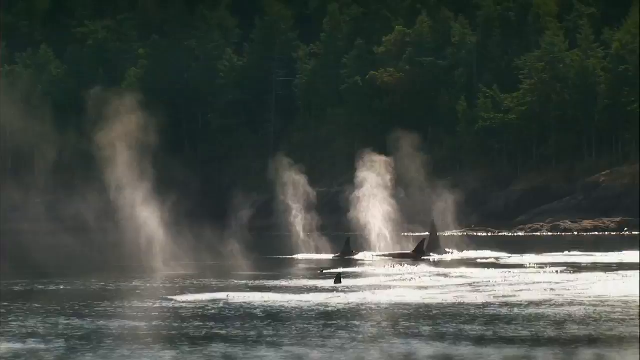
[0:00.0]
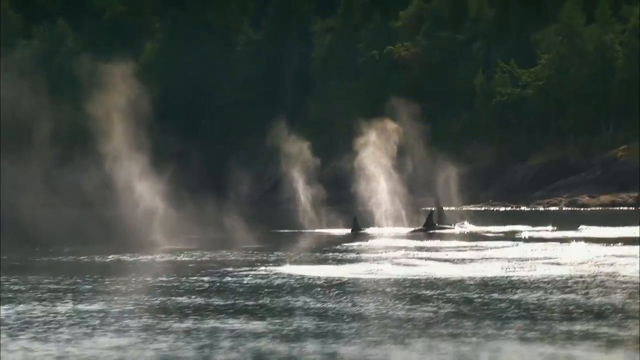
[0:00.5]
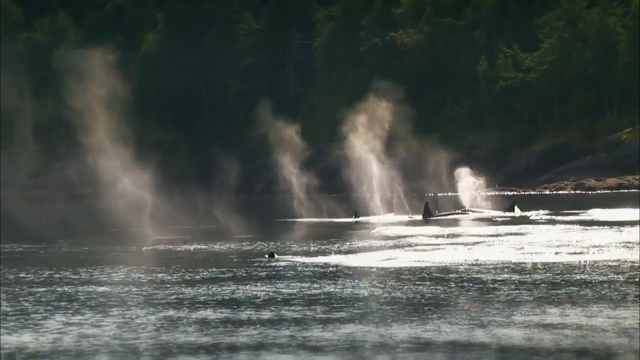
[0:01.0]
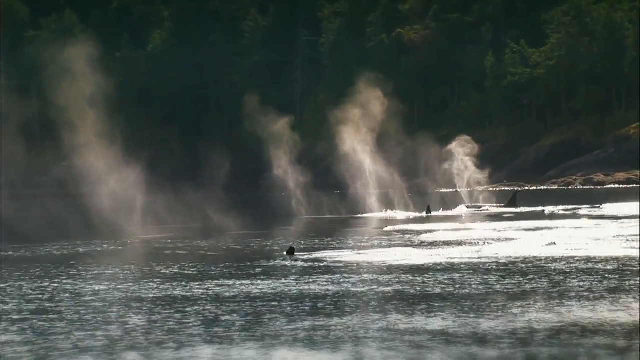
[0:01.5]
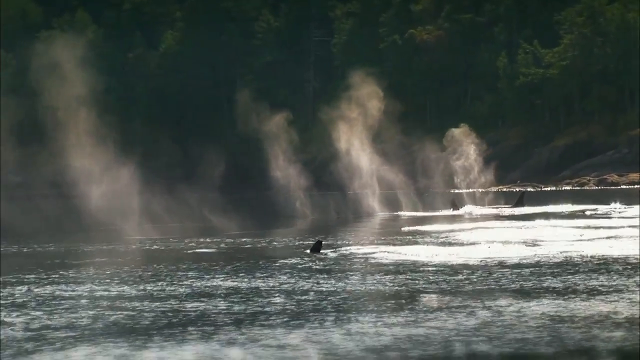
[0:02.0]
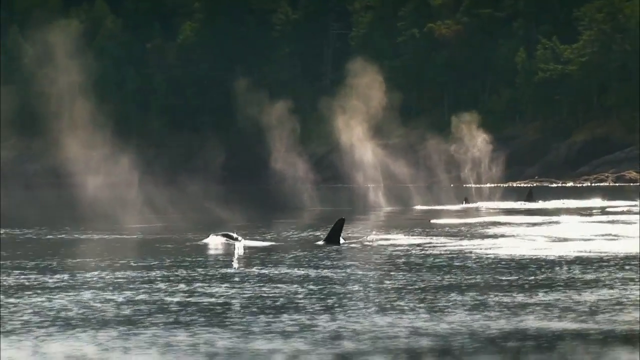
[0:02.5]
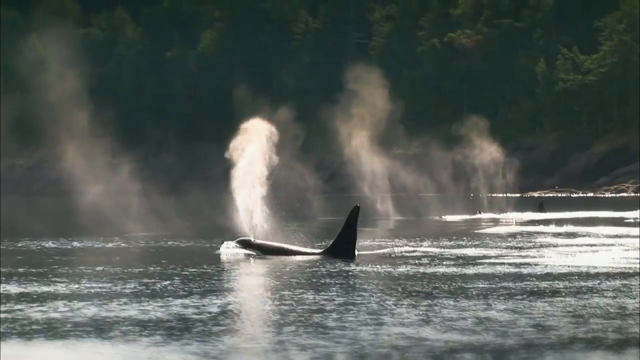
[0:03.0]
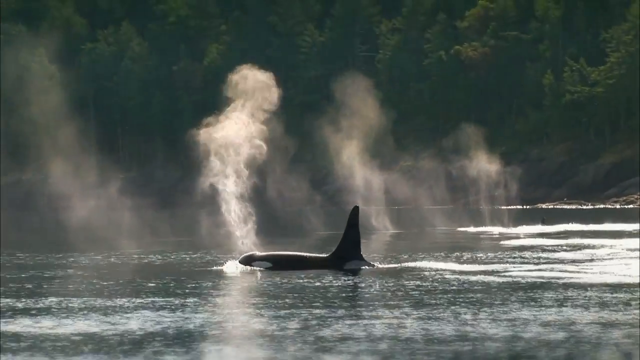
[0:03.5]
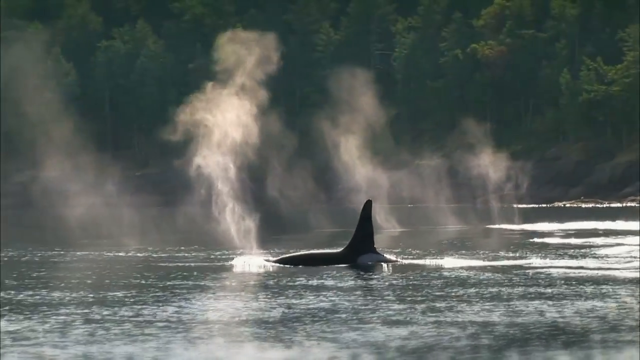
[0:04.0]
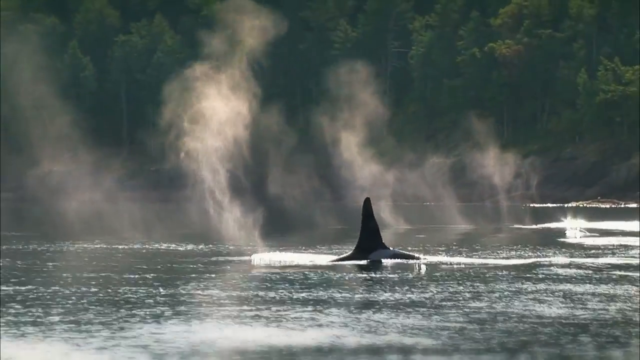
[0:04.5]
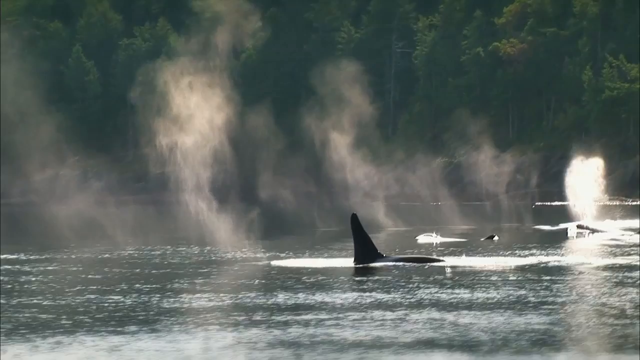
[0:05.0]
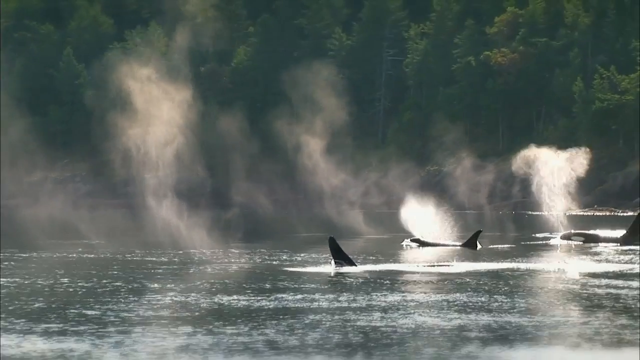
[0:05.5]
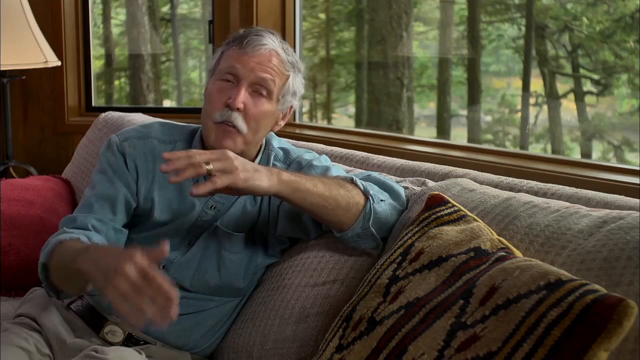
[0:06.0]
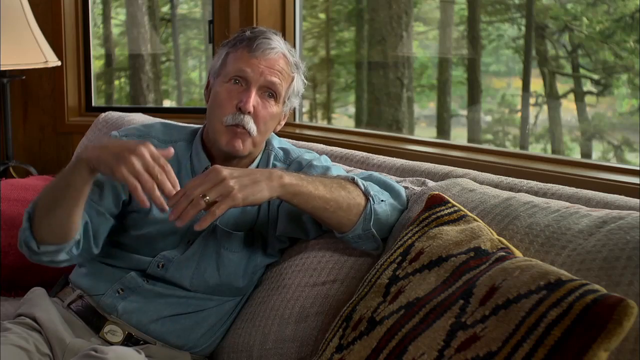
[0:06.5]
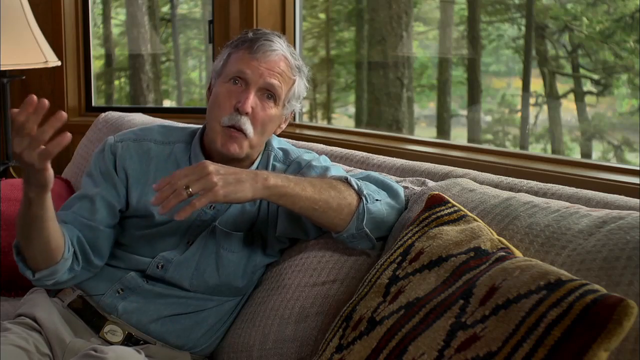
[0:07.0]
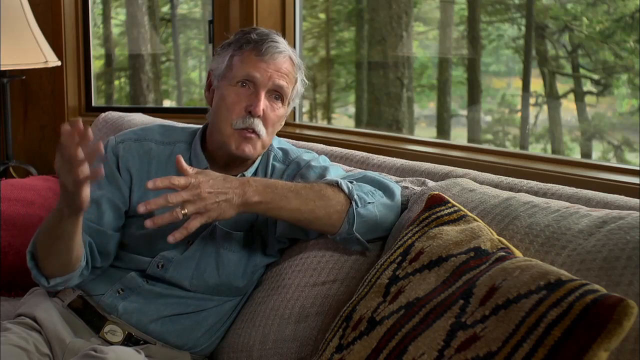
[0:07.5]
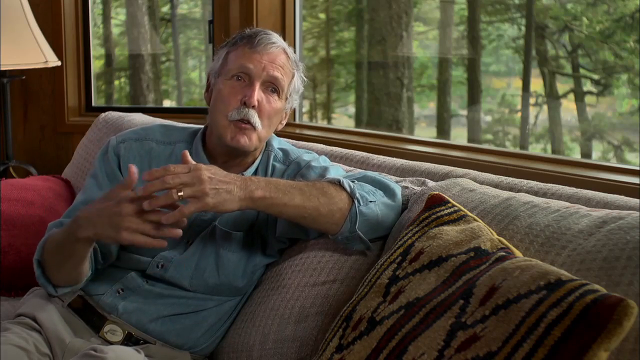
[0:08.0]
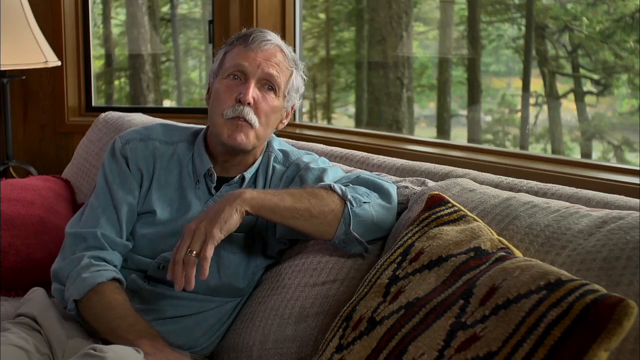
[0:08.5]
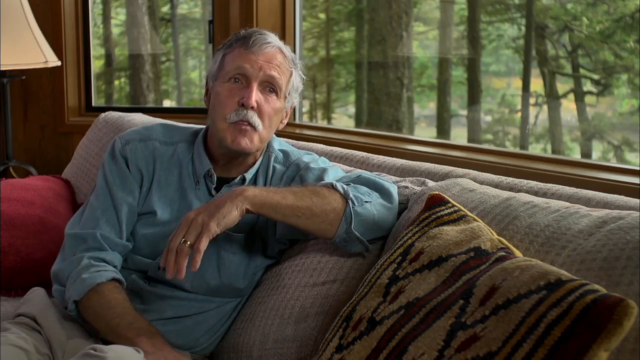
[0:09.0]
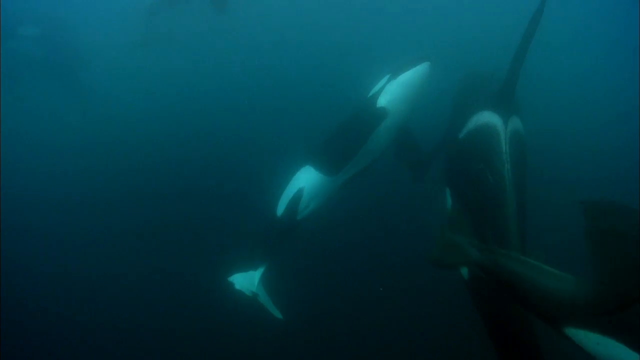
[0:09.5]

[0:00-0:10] A body of water appears, with some trees in the background, so it is unclear whether this is the sea. Whales are in the water; the place seems to be a sanctuary or nature reserve where injured marine life is kept. Fins stick out of the water, and the whales blow water out of the hole at the top of their heads. They appear to be killer whales, the black and white kind. A man in a blue shirt then sits on a couch, talking to the camera, followed by more shots of the whales.